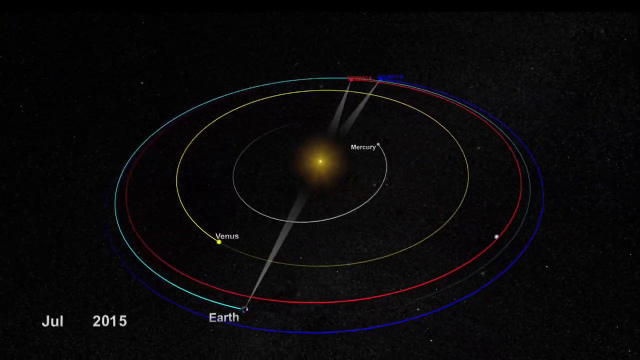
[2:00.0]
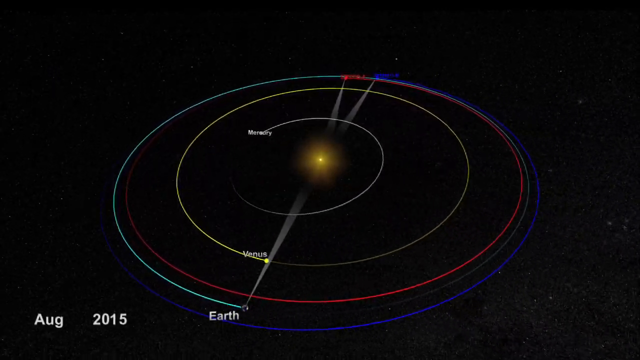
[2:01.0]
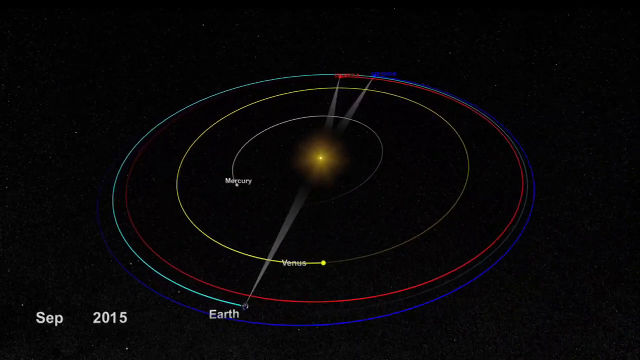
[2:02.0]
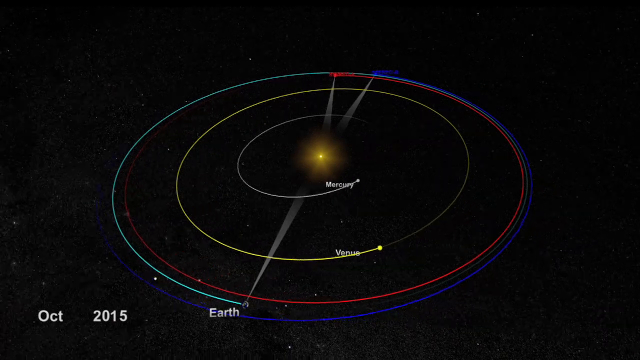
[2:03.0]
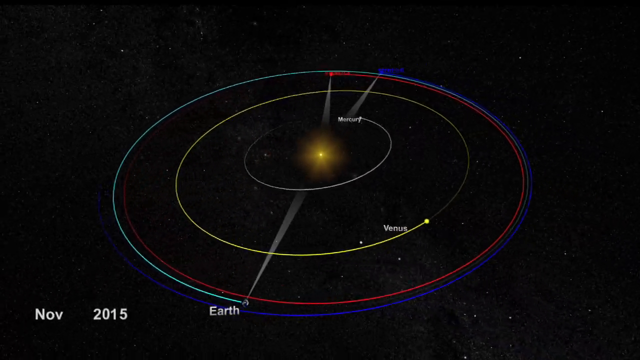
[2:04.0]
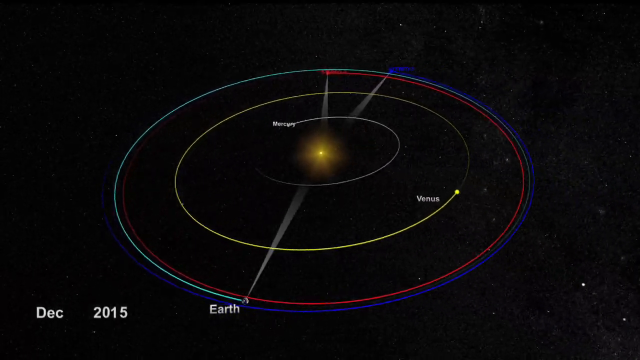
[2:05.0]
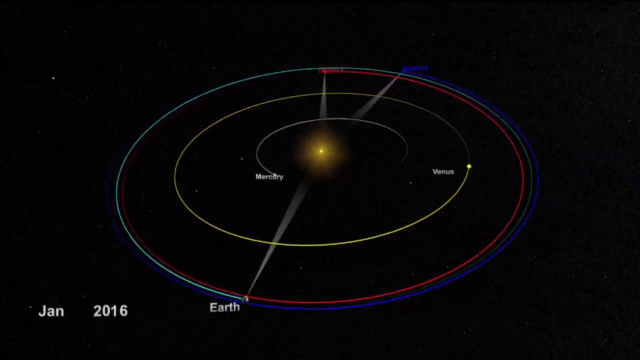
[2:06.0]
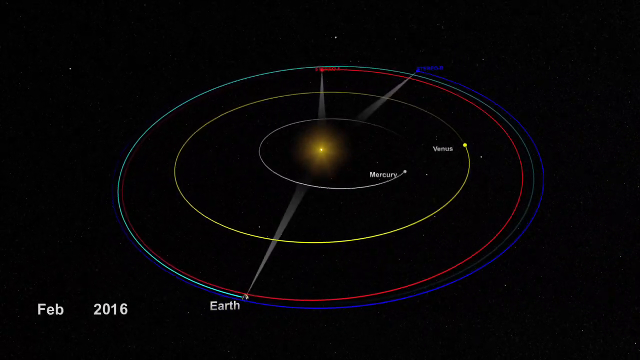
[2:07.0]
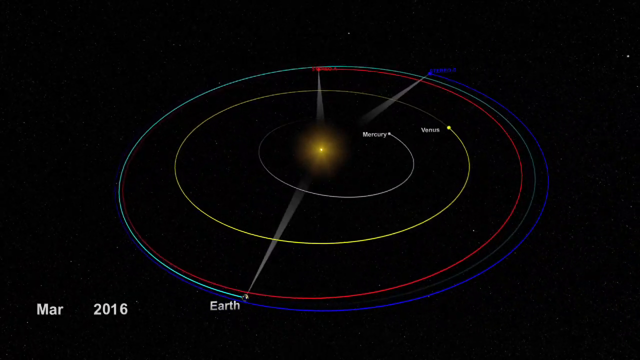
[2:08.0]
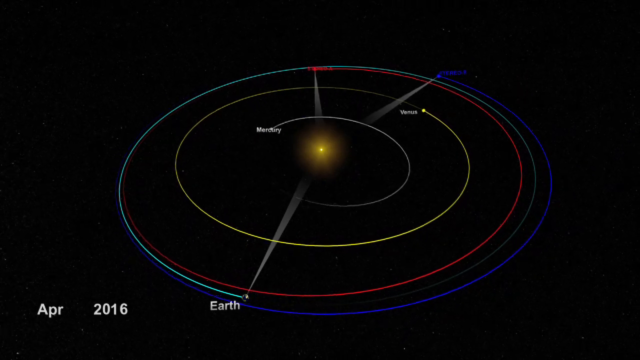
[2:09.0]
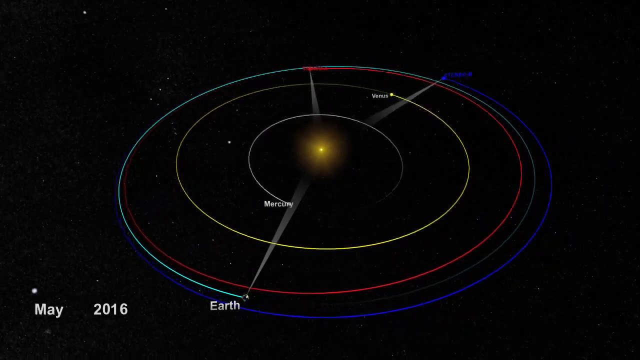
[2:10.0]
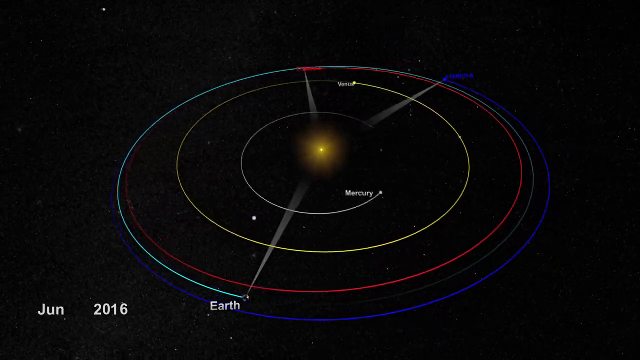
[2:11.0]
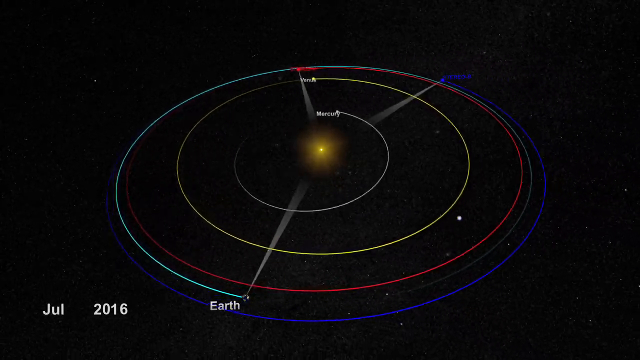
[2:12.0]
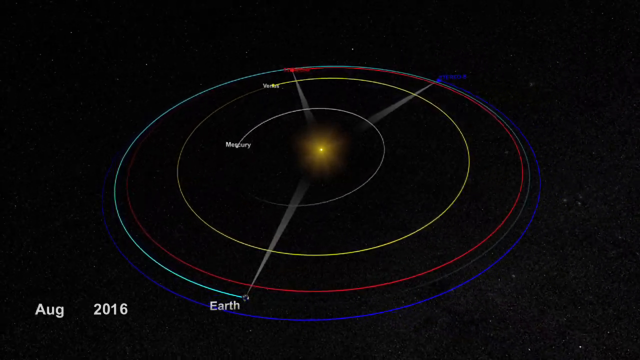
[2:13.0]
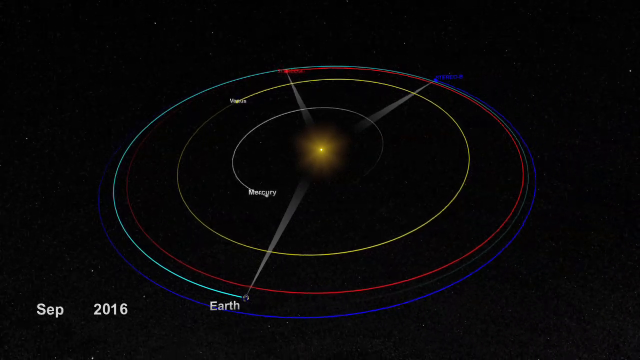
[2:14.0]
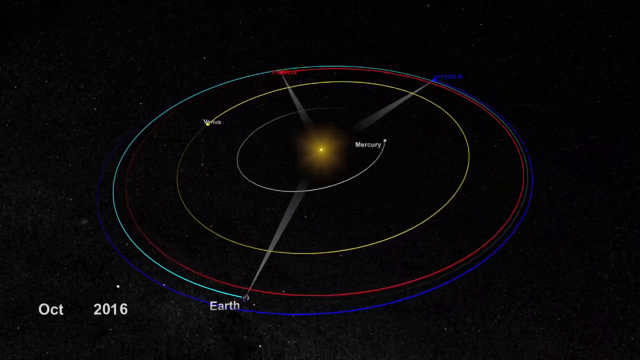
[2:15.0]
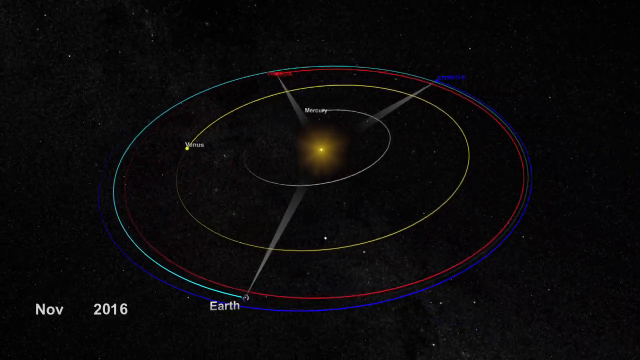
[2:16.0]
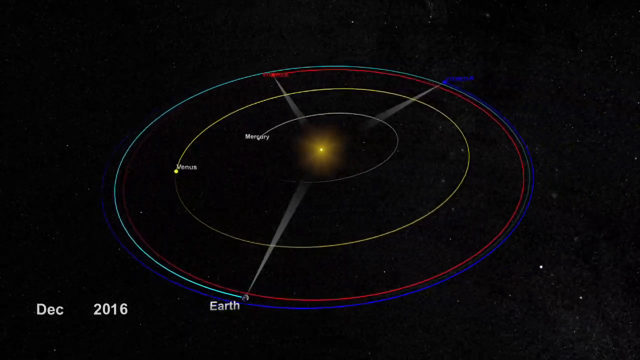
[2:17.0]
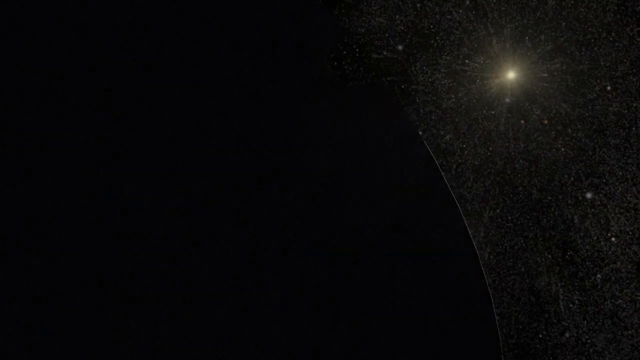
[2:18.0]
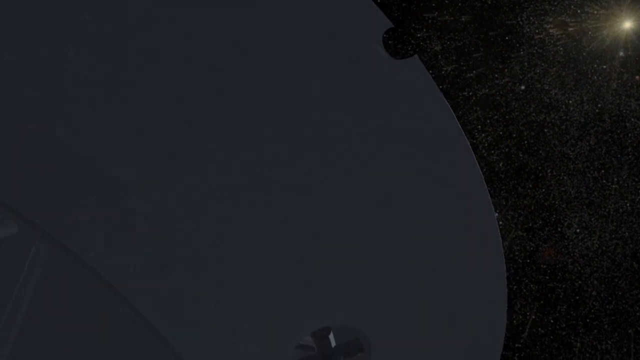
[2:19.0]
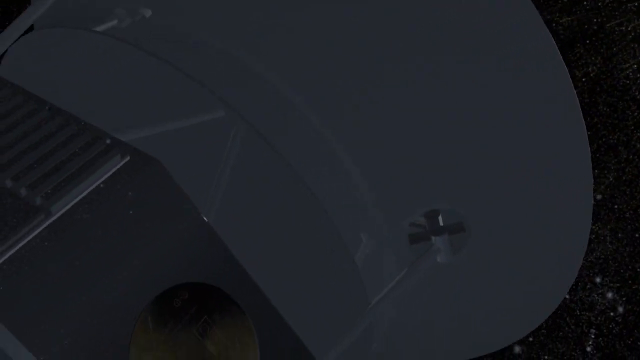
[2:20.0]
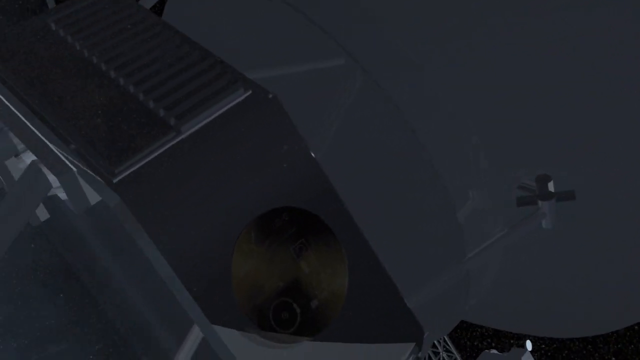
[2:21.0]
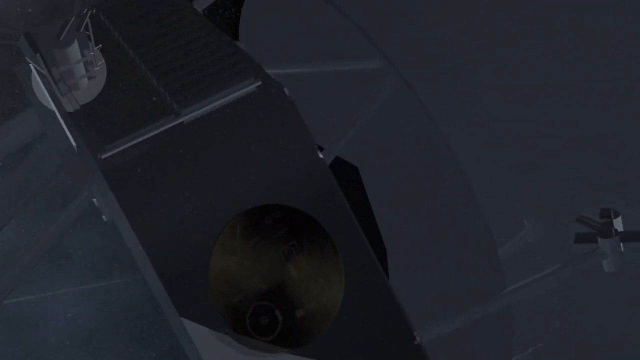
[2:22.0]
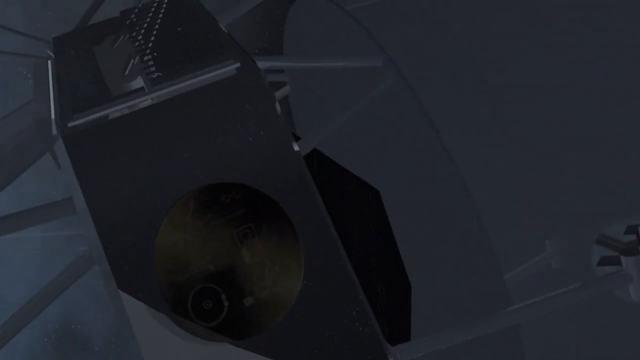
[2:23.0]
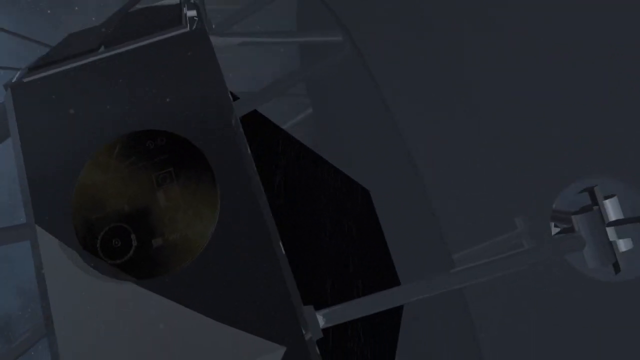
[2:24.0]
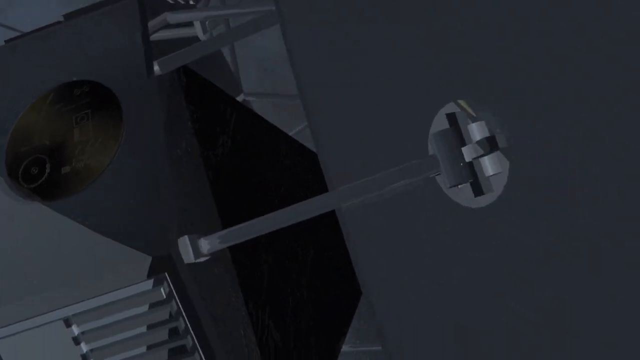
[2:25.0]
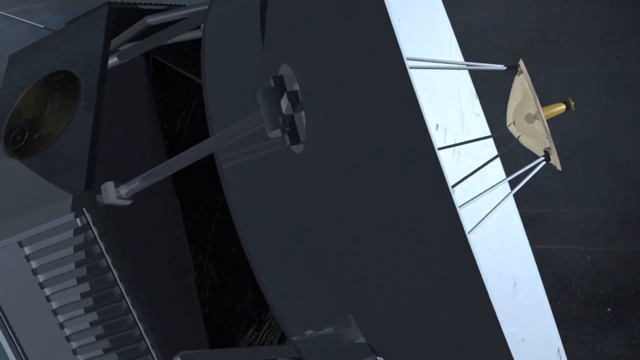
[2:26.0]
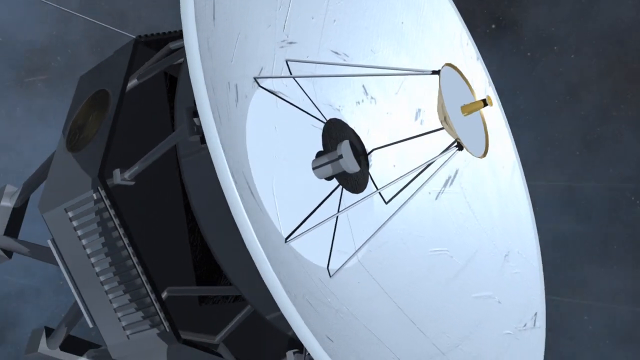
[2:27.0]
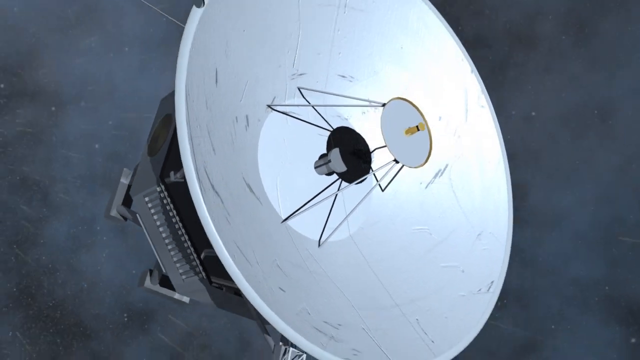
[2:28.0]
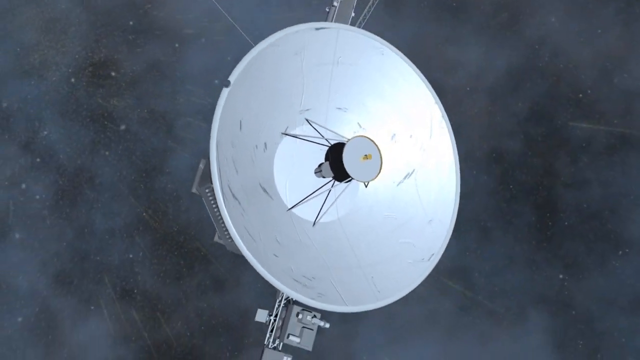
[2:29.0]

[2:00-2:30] A 3D rendering shows three planets and two satellites orbiting the Sun on a black background, labeled "July 2015" in the bottom left. Mercury, Venus, Earth and the two satellites rotate counterclockwise around a yellow orb in the center, the Sun. The background, a black night sky with various white dots representing different objects and stars, spins quickly as well. The two satellites maintain an equal rotation with Earth, forming a triangle around the Sun, and the date in the bottom left corner changes after every rotation. The video then shows a 3D rendering of one of the satellites and its large dish. The camera slowly pans towards the right until it comes around to the main section, showing the dish straight on, and then pans outwards away from the satellite.